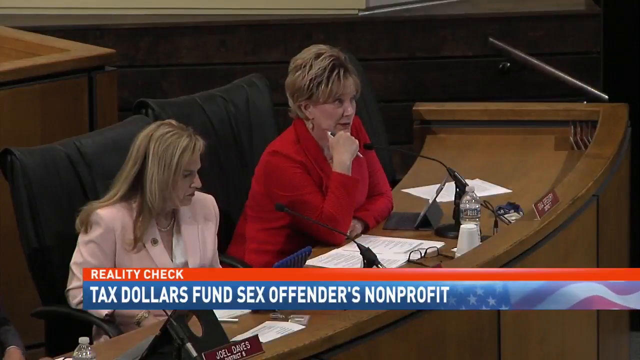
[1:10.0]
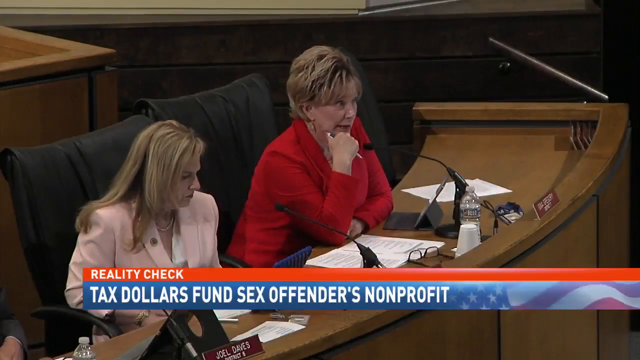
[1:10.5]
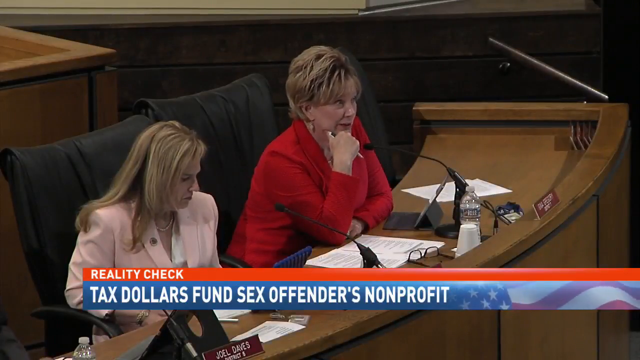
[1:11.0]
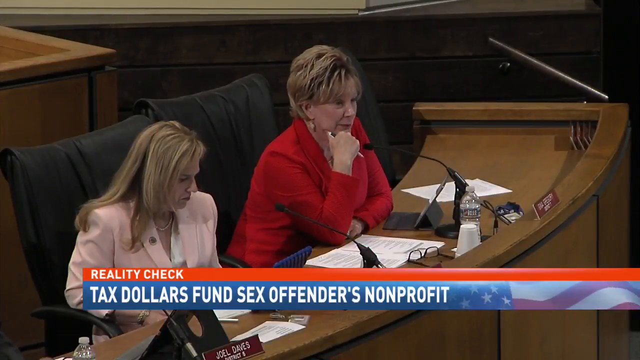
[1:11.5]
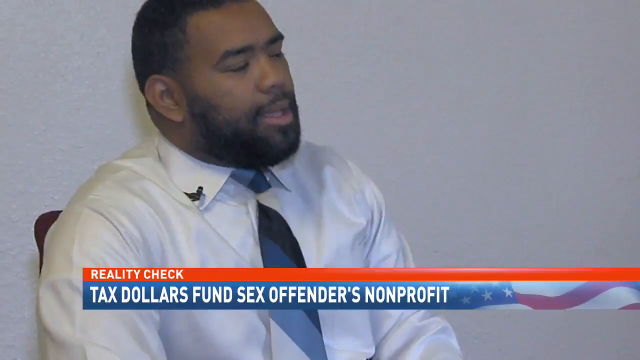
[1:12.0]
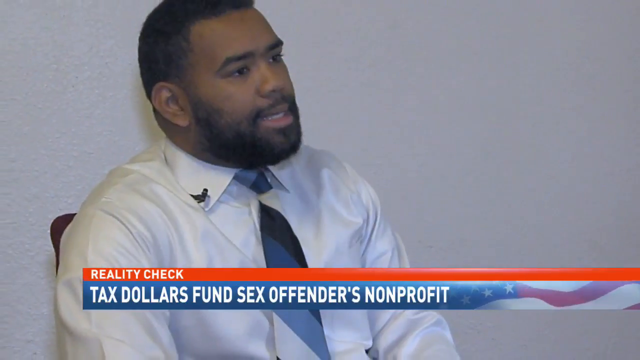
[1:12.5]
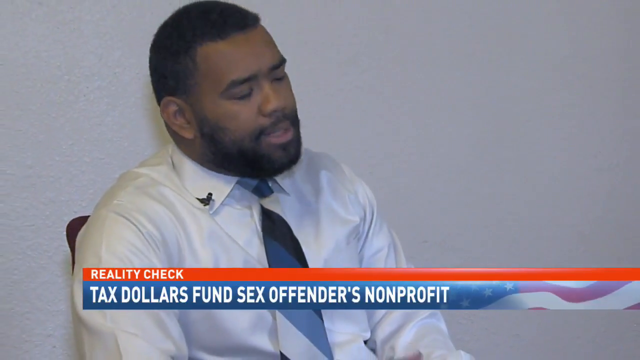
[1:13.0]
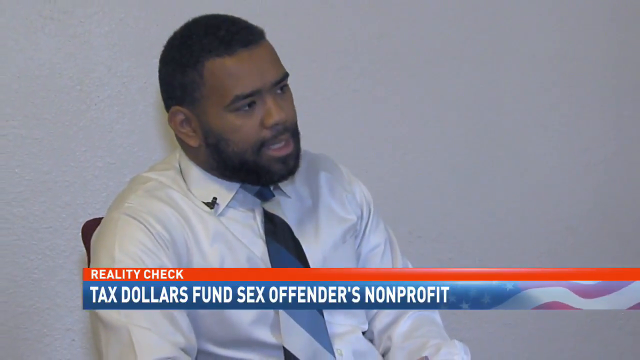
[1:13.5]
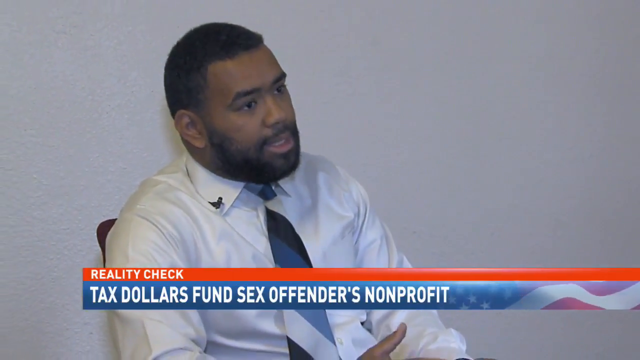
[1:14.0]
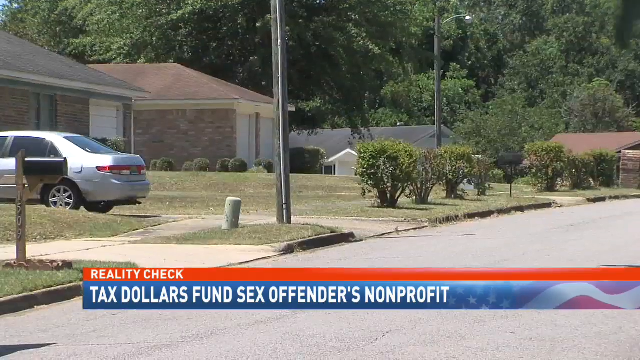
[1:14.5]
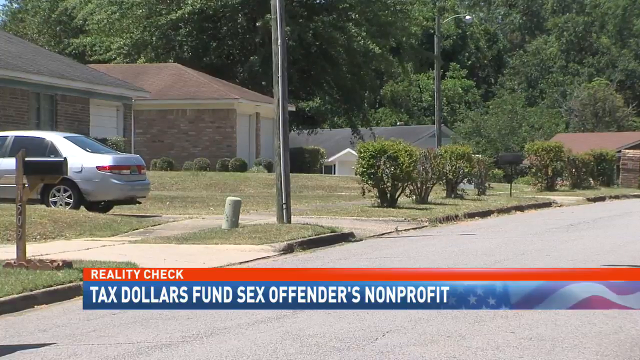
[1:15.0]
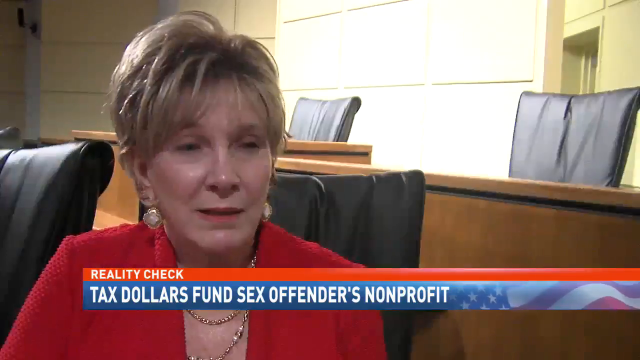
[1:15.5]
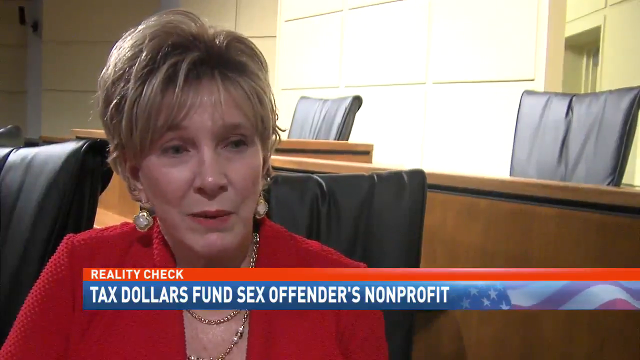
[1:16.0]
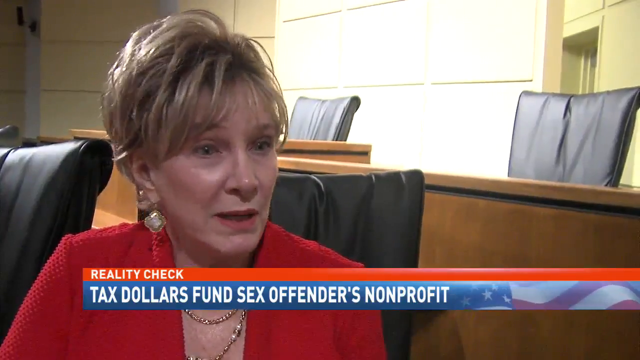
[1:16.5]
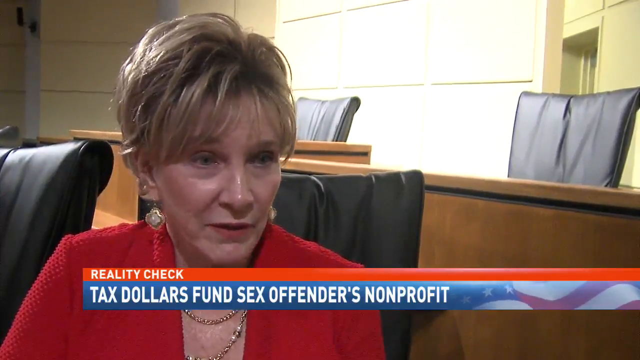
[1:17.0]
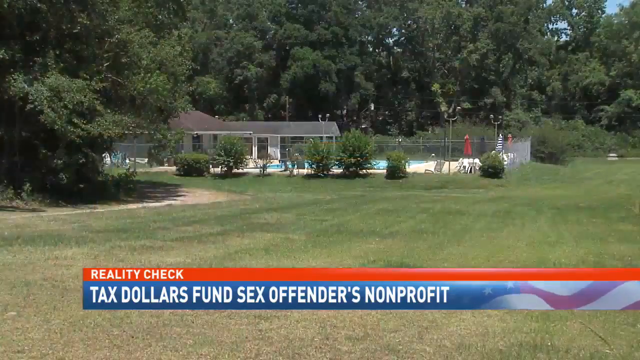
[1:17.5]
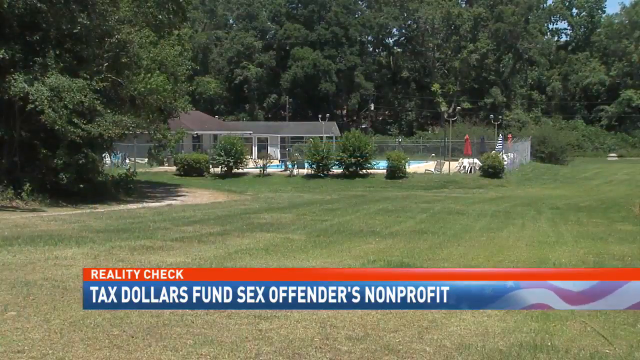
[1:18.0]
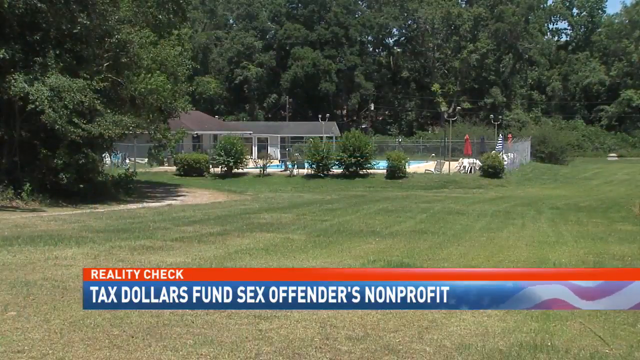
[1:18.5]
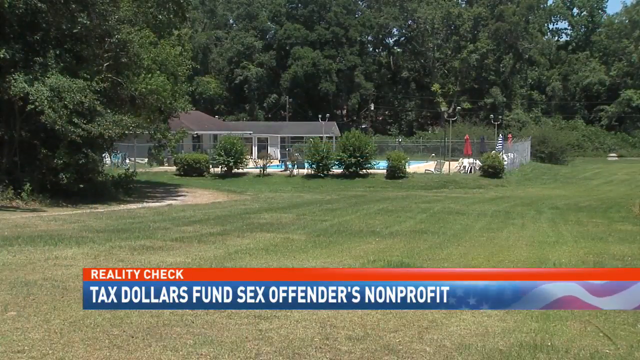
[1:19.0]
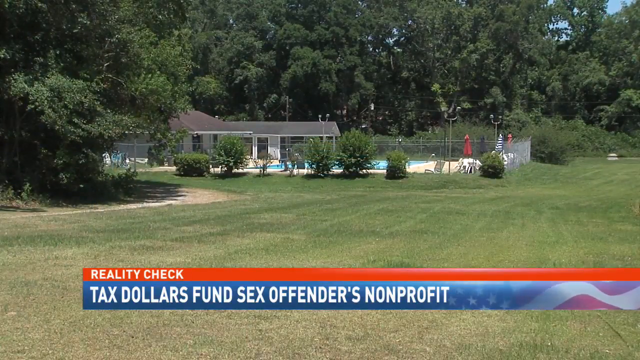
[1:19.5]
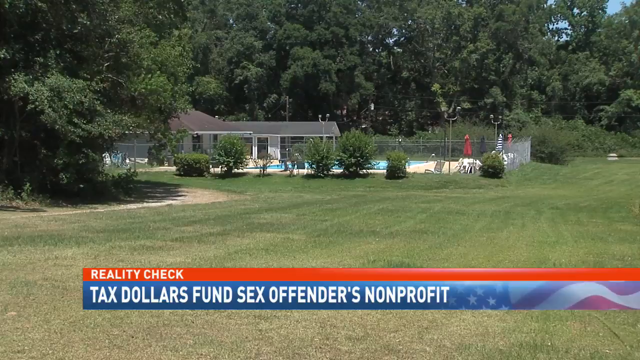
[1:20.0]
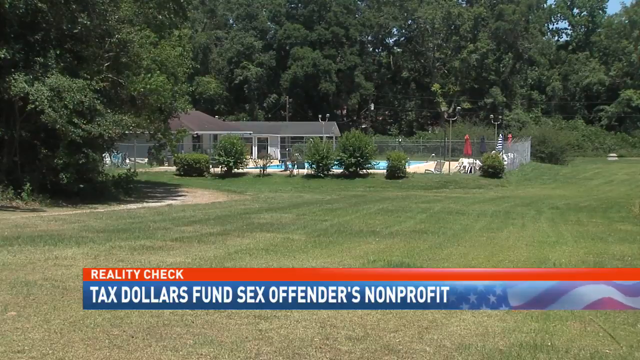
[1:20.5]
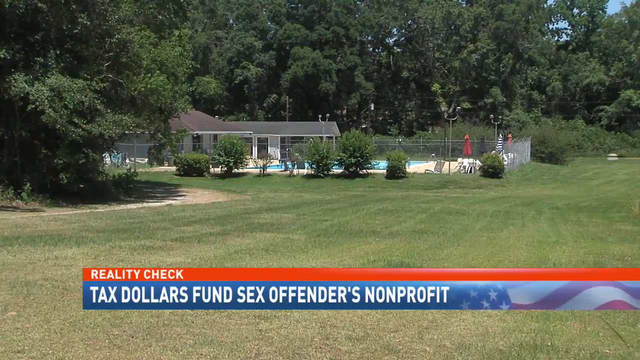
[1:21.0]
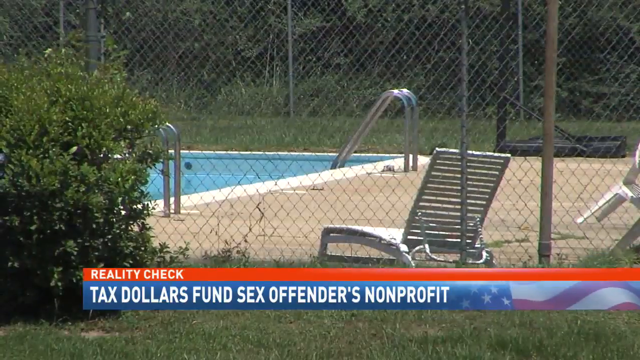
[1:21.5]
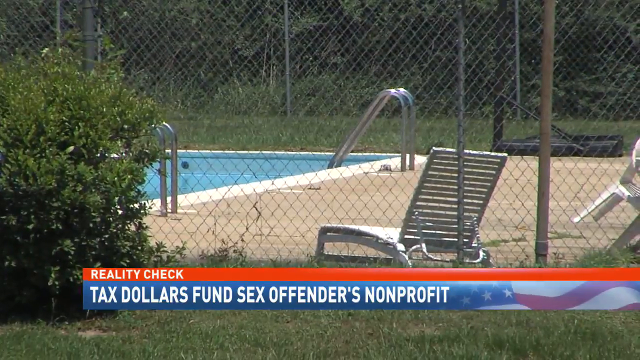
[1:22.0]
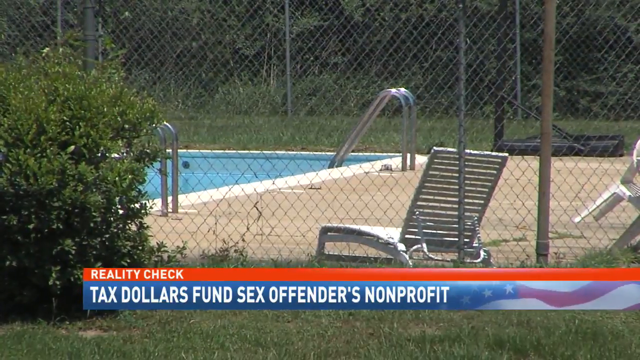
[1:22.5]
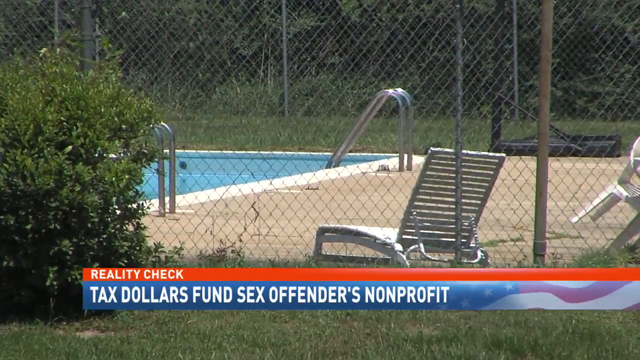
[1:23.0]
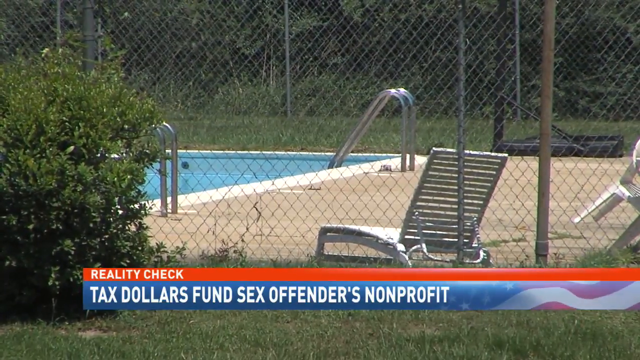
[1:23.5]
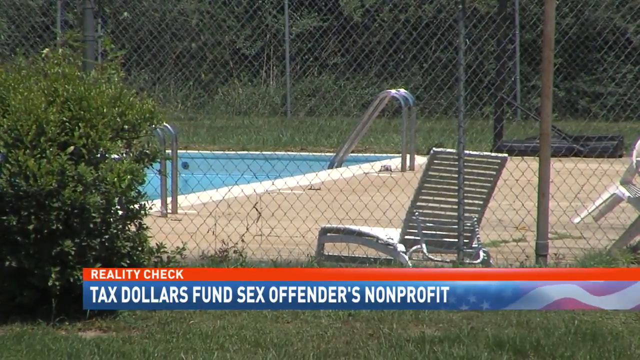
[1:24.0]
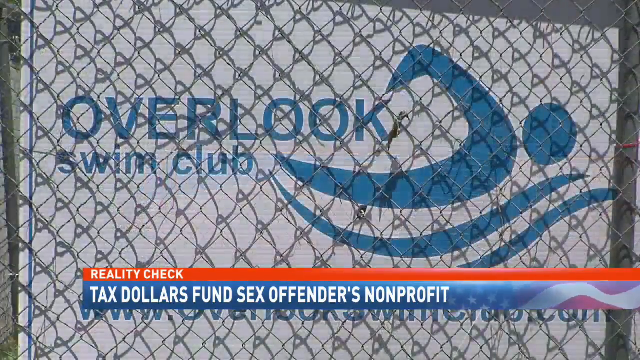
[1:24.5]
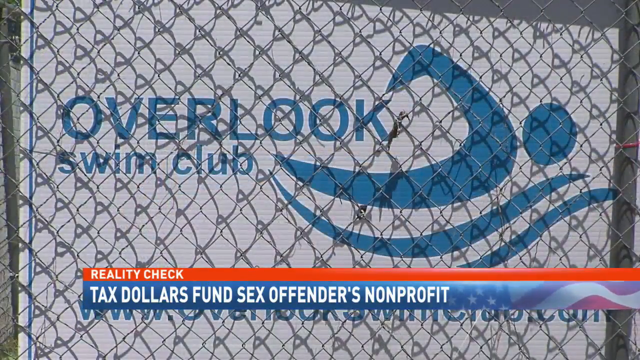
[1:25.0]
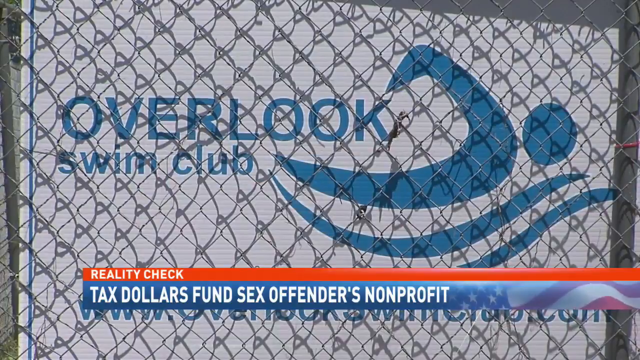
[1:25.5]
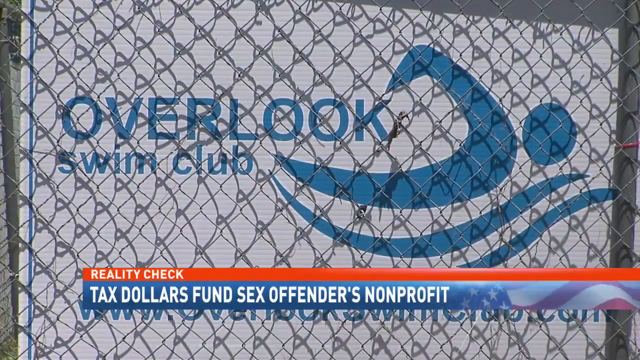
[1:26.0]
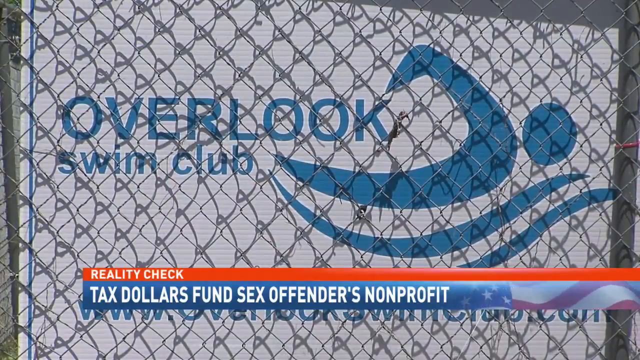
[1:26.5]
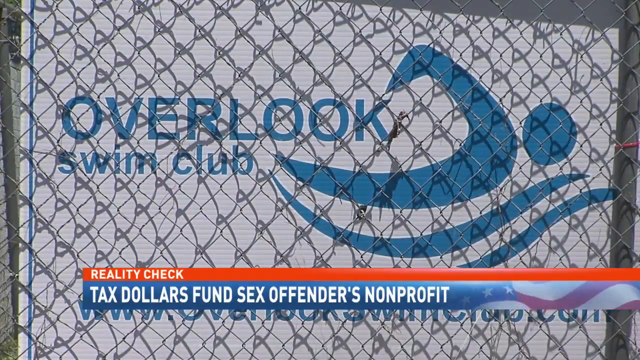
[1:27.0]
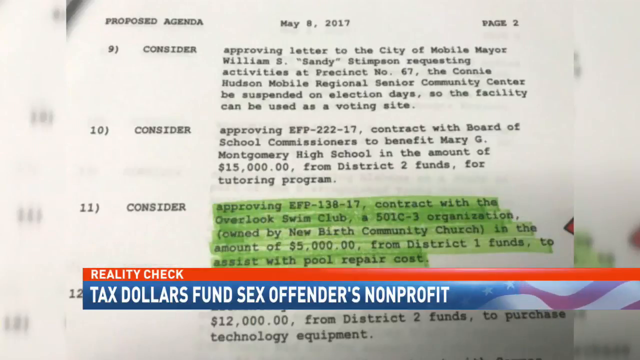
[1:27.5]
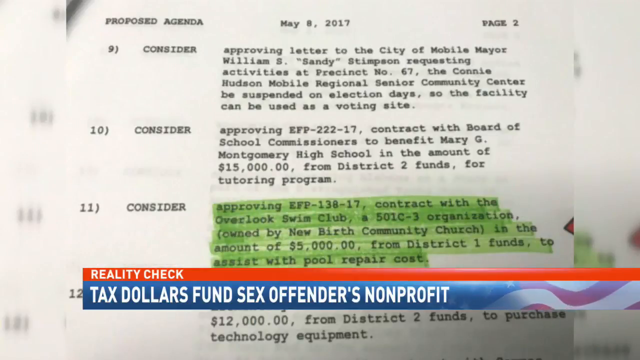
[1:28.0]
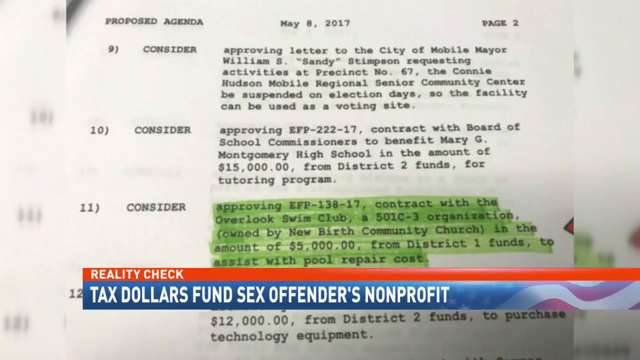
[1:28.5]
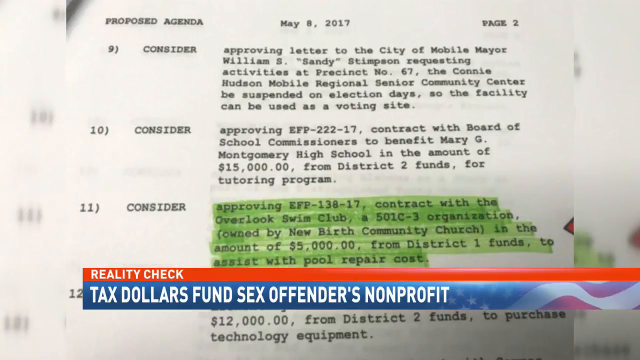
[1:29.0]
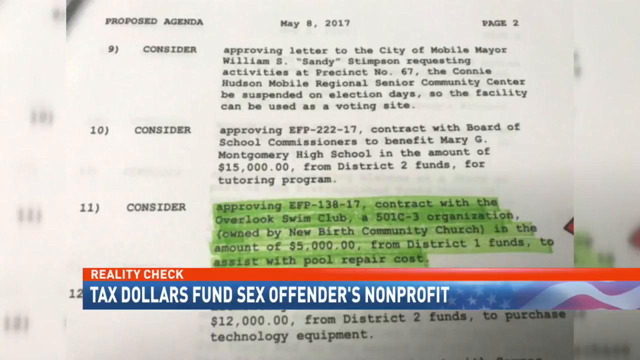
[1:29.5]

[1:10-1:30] The councilwoman in red with short blonde hair holds a pen and leans over her desk, speaking into a black microphone. A water bottle and a water cup are in front of her, and her glasses are down on the table in front of two pieces of paper. She seems very serious. To her right, sitting in another big black chair, is another councilwoman with long blonde hair in pink business attire, wearing a necklace with a white shirt underneath, typing on a dark blue laptop. The scene switches to a councilman of African American descent in a white dress shirt and a blue, black and white tie, with a scruffy beard and short black hair, who seems to be seriously speaking to the camera. Then the scene switches to a neighborhood with four one-story homes, a silver car in the driveway on the left, short bushes in front of the homes, and a large forest in the background.